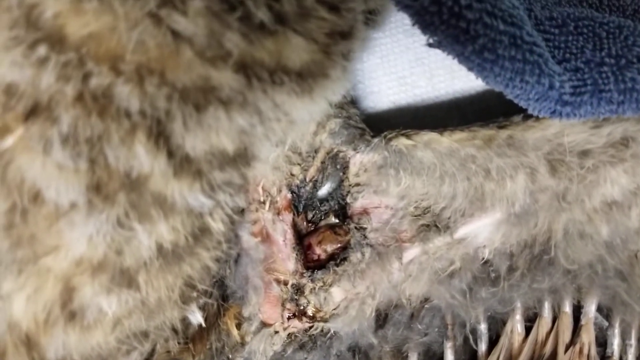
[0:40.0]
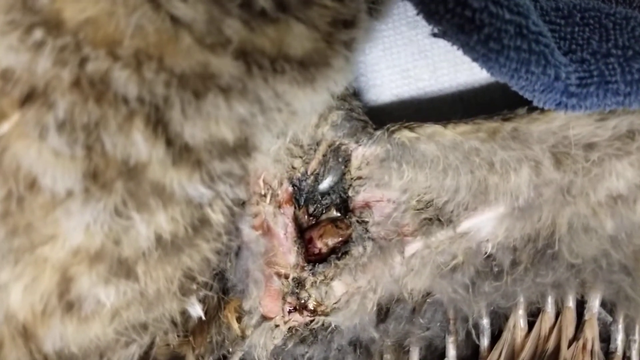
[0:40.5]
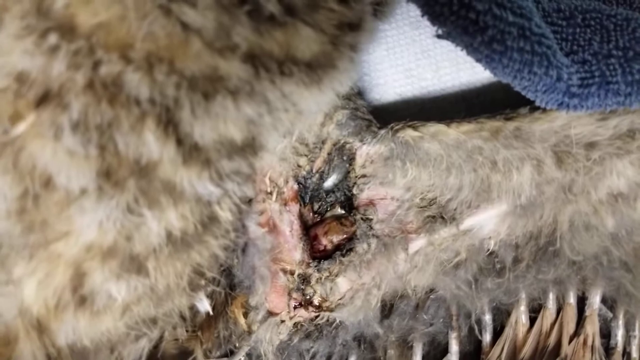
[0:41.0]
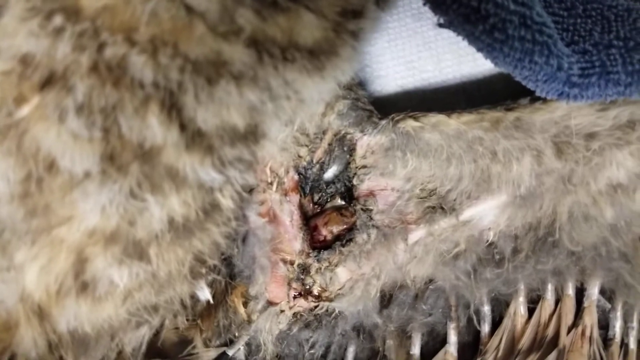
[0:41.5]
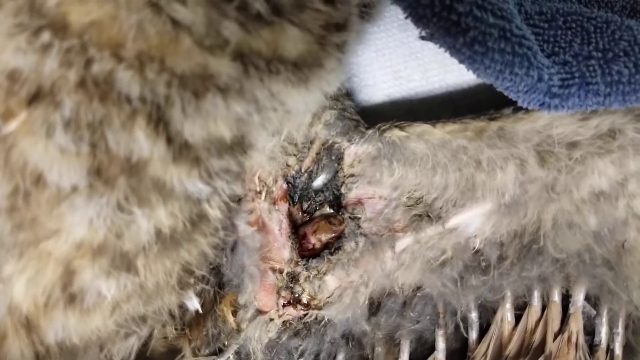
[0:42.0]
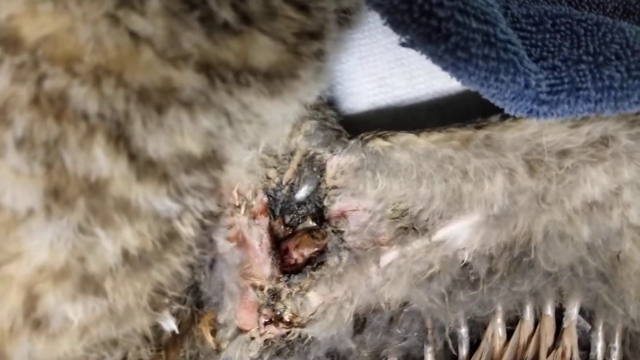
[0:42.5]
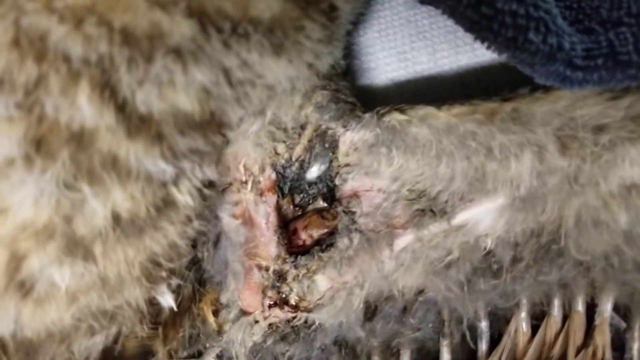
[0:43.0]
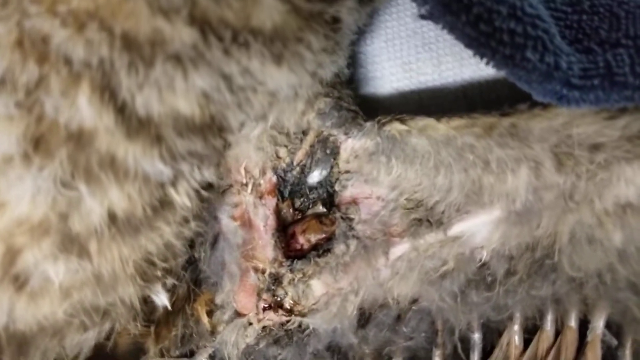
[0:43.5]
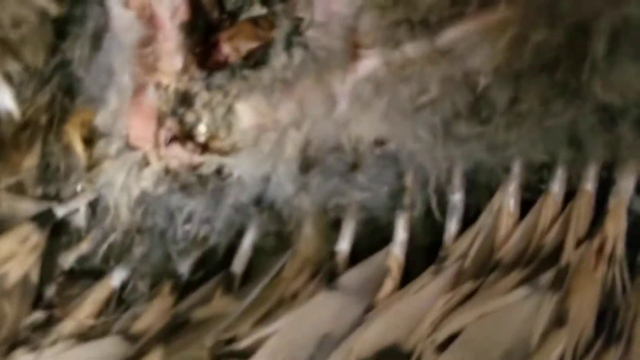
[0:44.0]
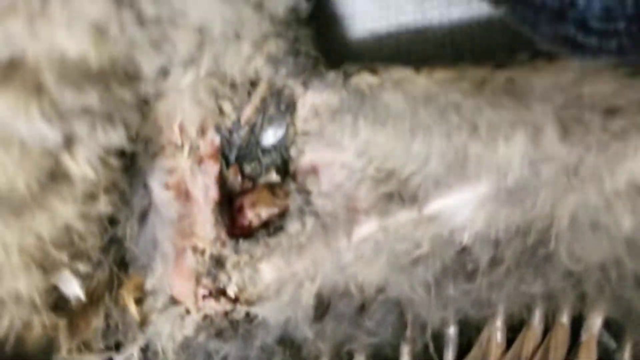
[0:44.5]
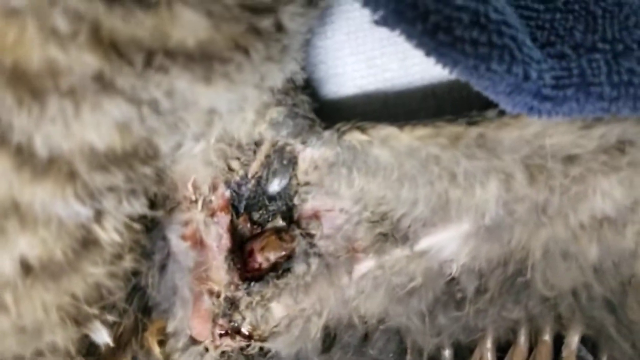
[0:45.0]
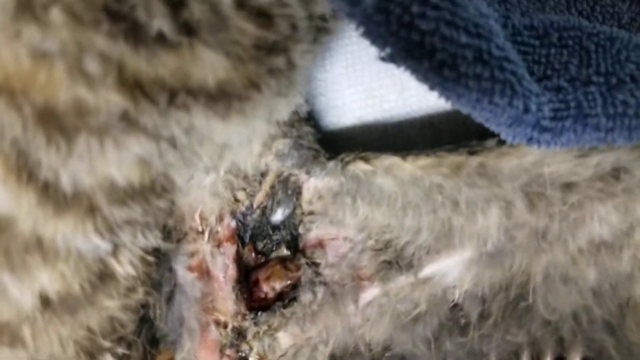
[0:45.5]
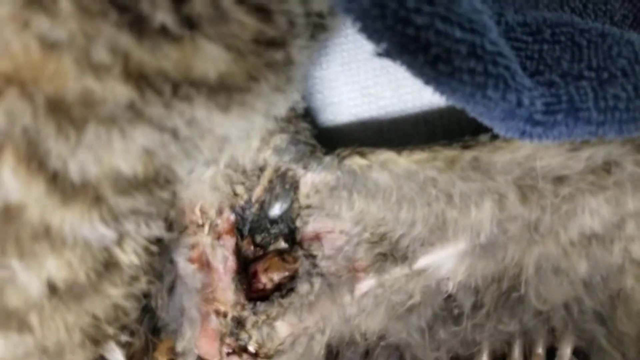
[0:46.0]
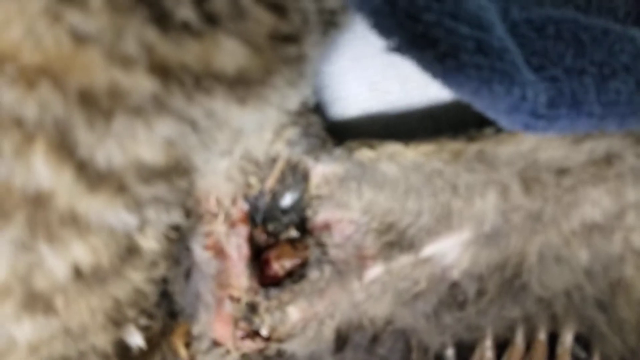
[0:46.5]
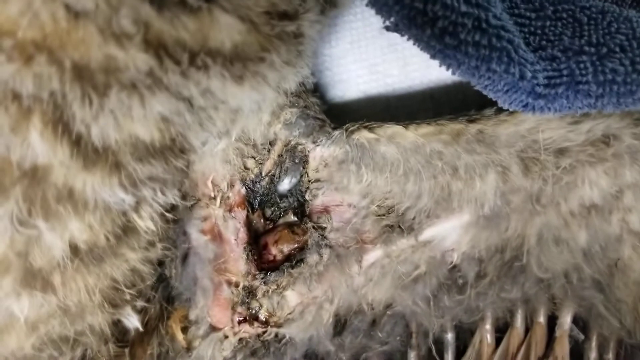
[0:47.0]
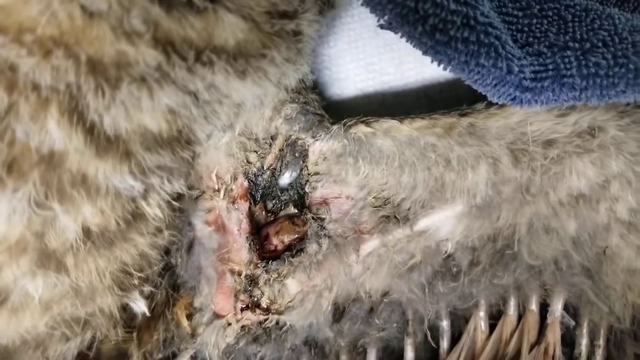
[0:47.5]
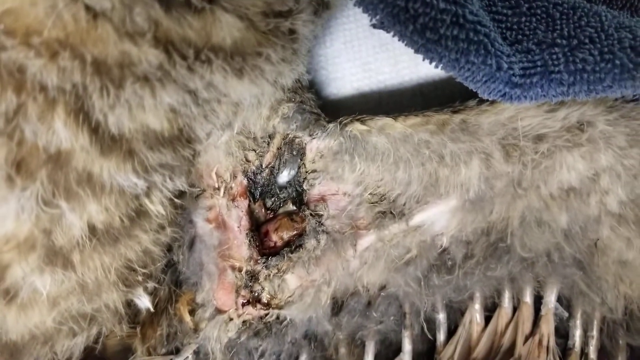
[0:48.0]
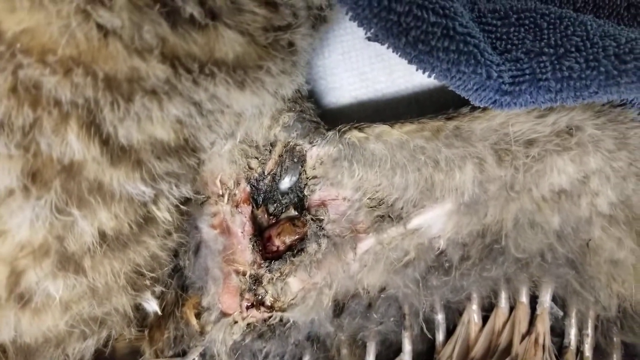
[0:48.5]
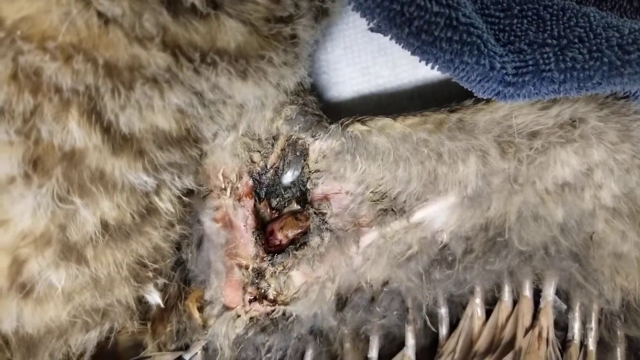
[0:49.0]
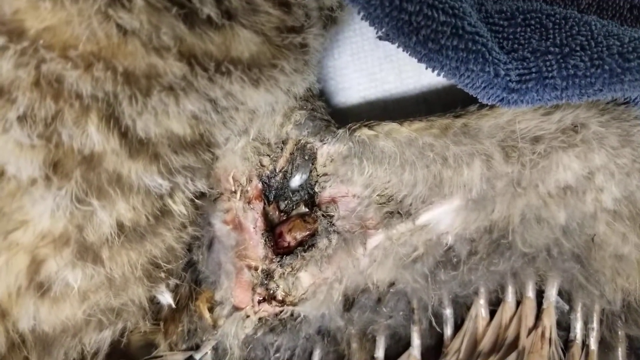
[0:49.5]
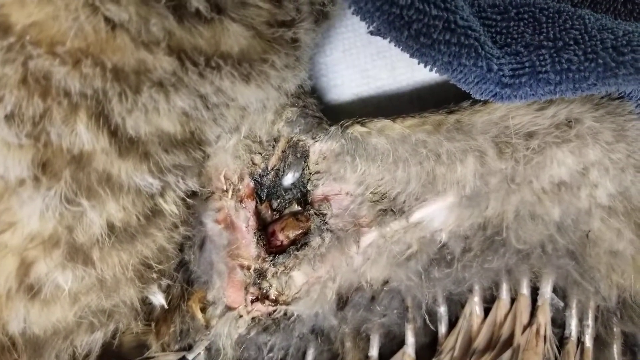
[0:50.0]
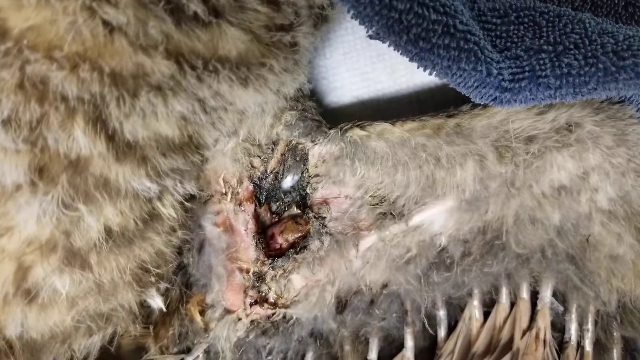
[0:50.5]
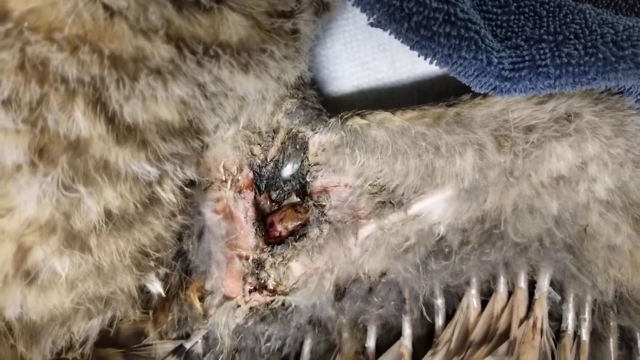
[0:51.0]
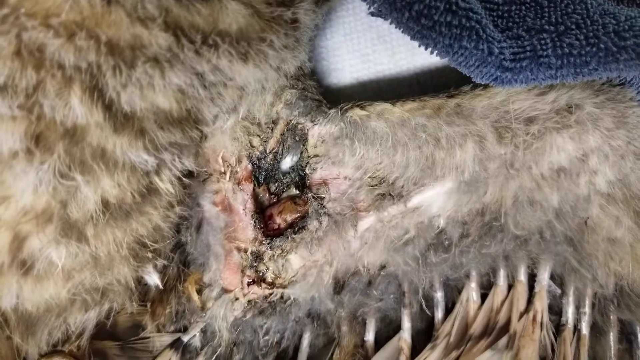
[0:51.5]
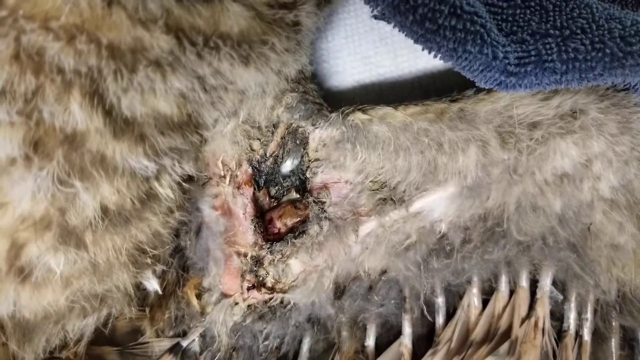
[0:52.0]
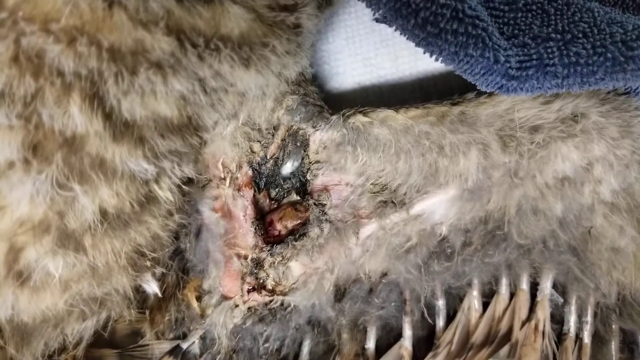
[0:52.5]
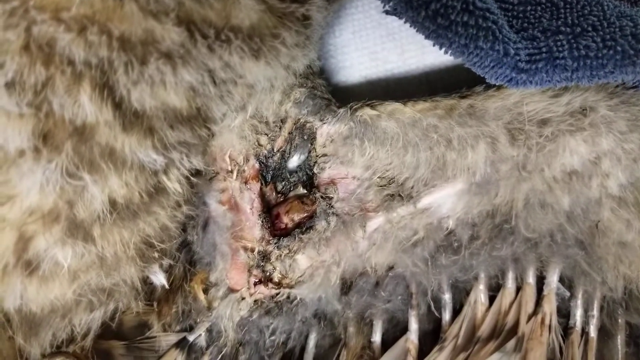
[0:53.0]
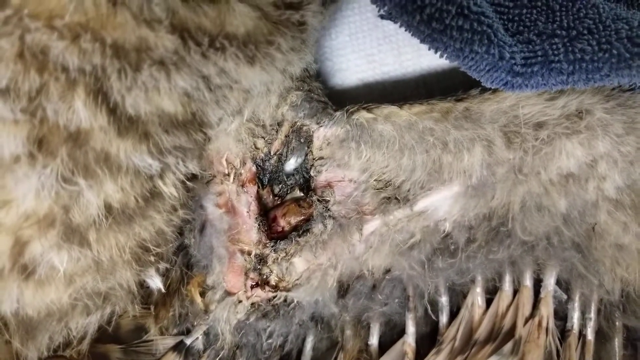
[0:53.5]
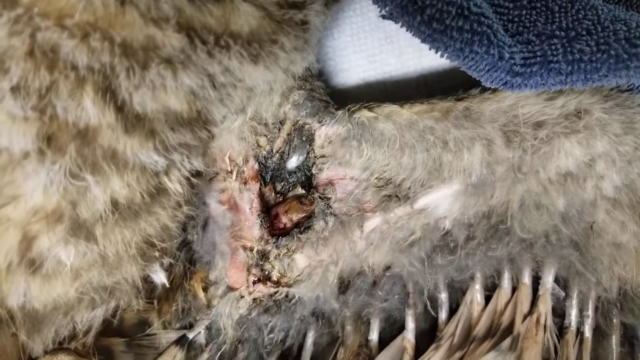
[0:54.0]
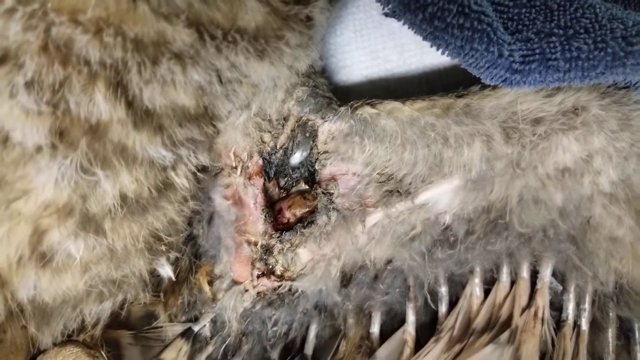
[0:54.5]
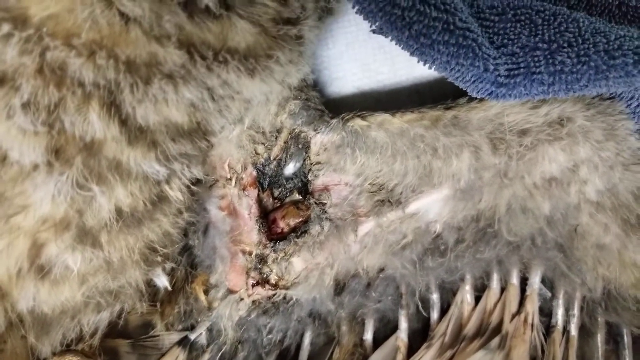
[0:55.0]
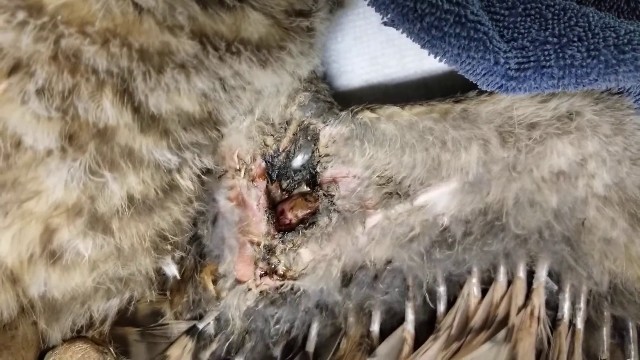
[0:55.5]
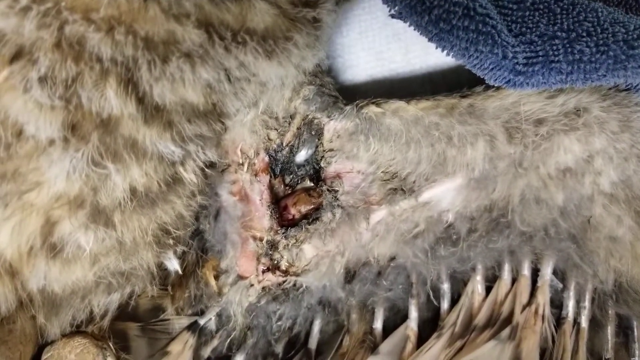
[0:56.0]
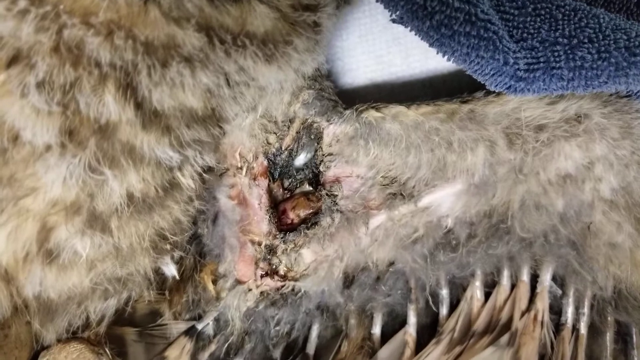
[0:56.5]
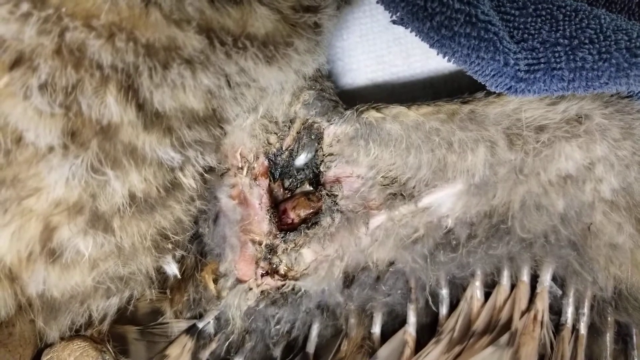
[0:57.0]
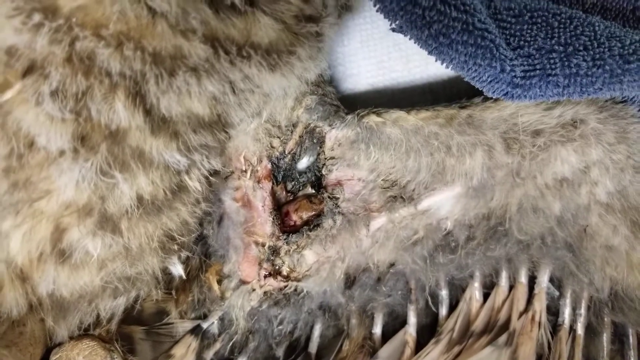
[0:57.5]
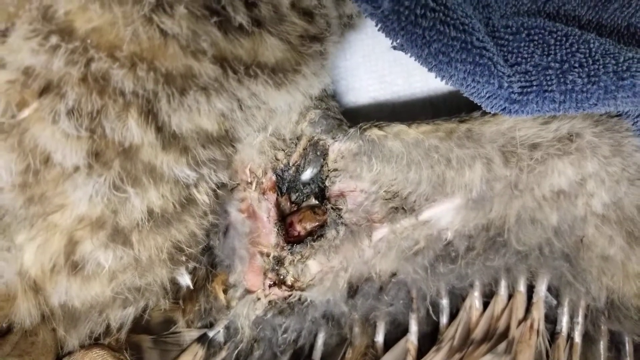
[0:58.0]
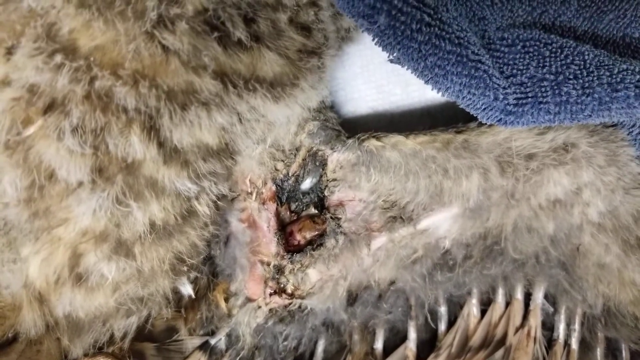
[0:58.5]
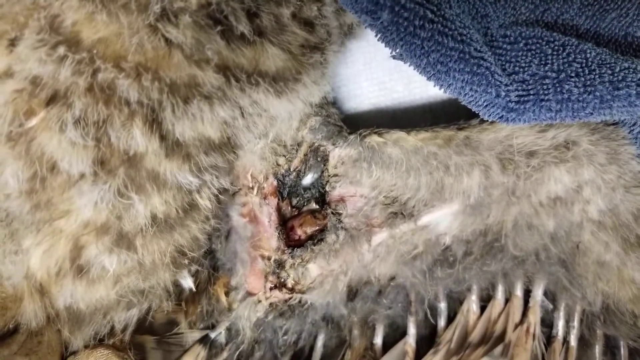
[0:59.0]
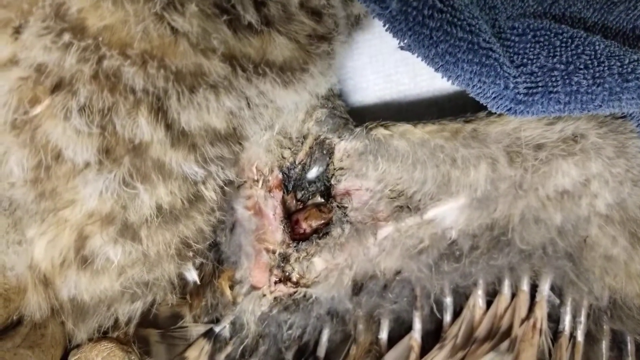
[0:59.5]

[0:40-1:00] The camera is moved even closer to the wound on the wing, without zooming. It is definitely a hole of some sort: different fibers are visible, matted fur surrounds the wound, presumably from blood, there is what could perhaps be some muscle, and several small holes let the surface behind the wing area show through. Around the wound there is less fur than on the rest of the bird, so these areas are damaged too. The camera stays focused close up on the wound. The bird's fur is an almost gray, light grayish color with some light brown bits and darker brown lines.